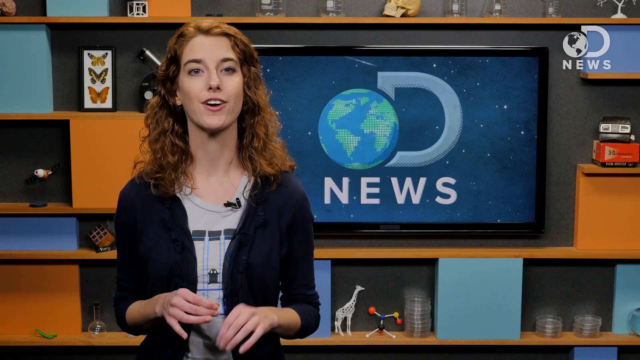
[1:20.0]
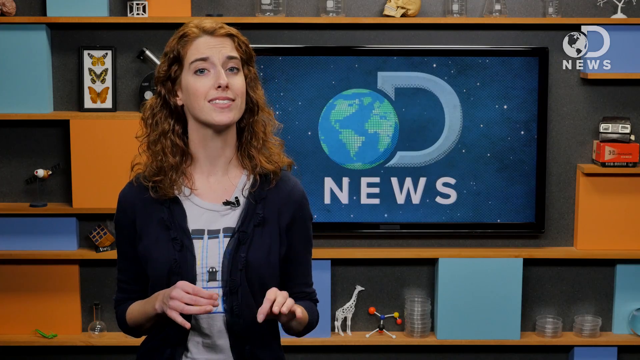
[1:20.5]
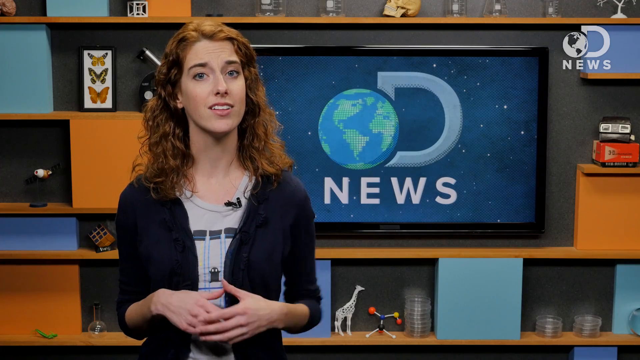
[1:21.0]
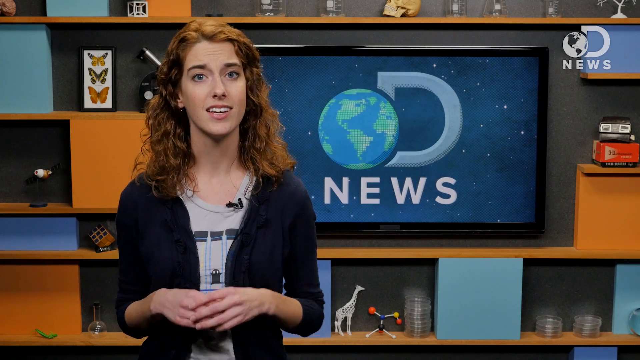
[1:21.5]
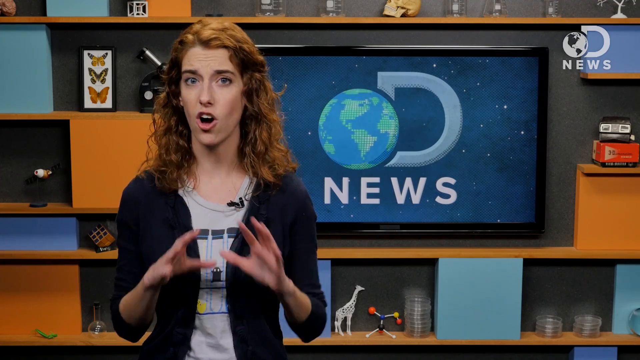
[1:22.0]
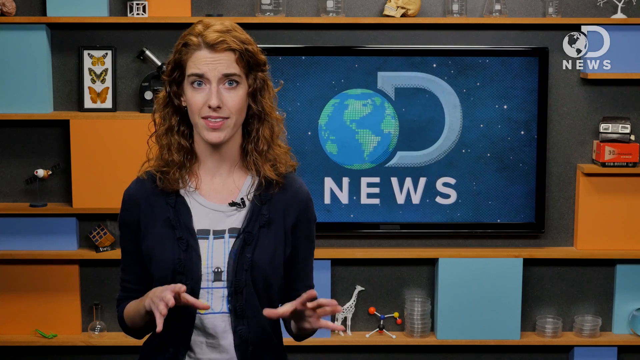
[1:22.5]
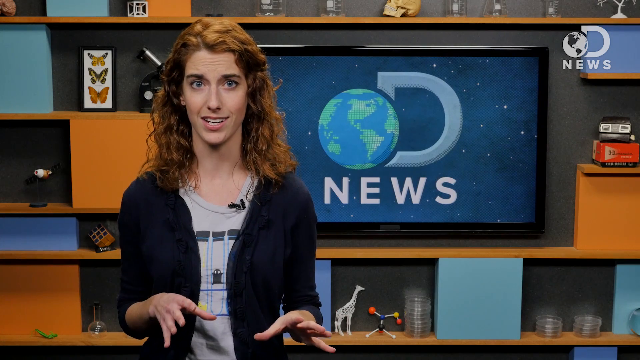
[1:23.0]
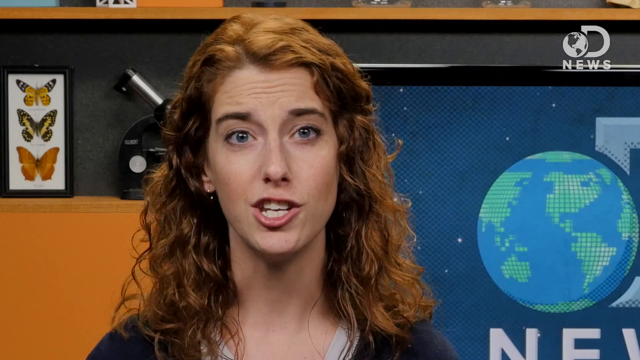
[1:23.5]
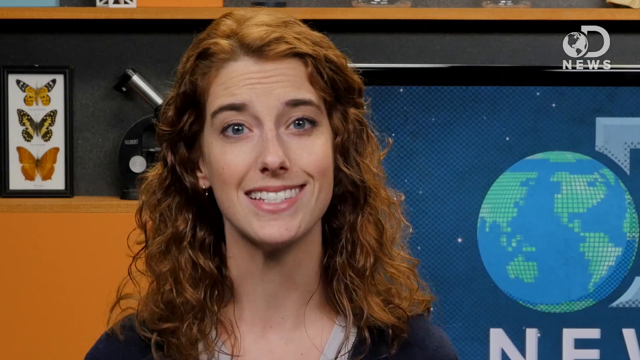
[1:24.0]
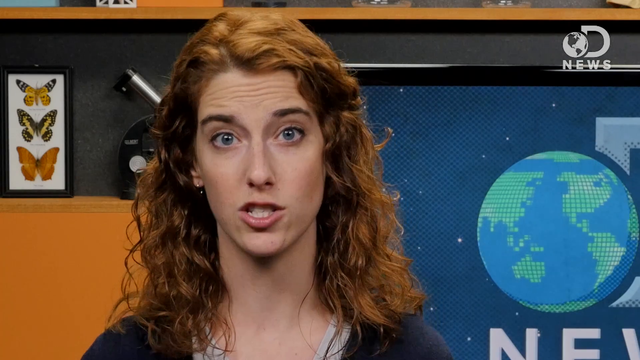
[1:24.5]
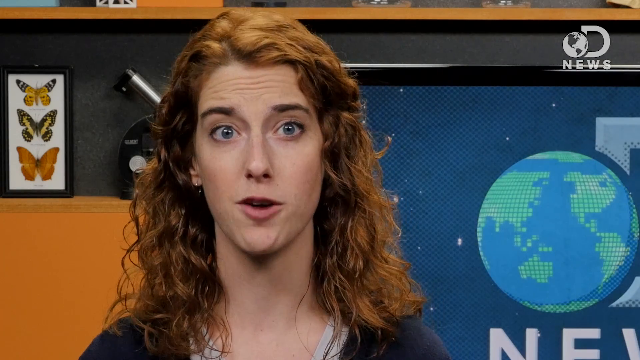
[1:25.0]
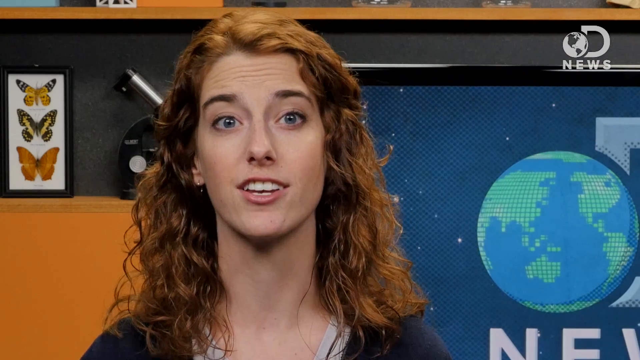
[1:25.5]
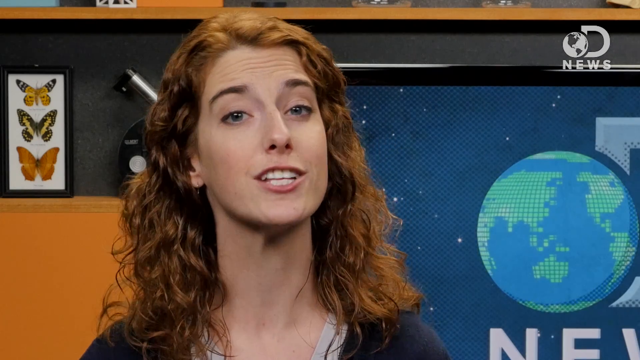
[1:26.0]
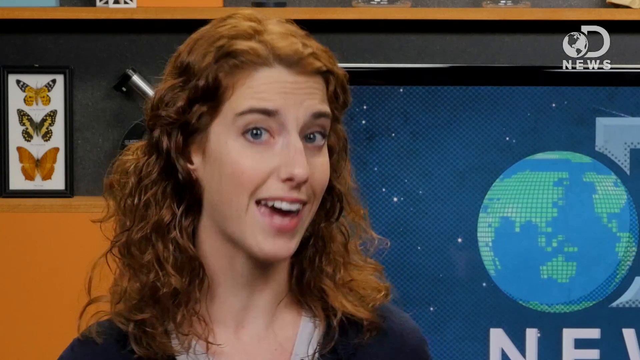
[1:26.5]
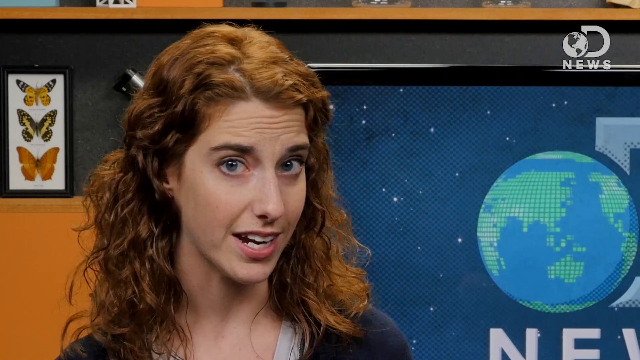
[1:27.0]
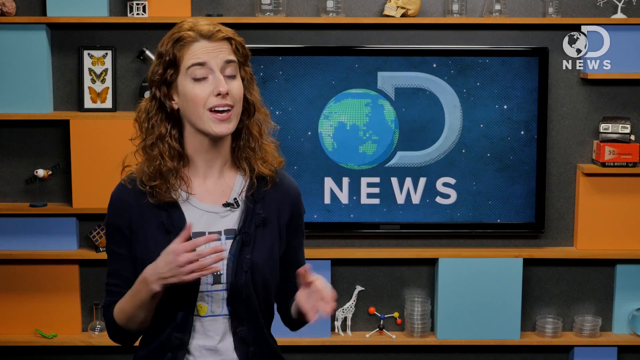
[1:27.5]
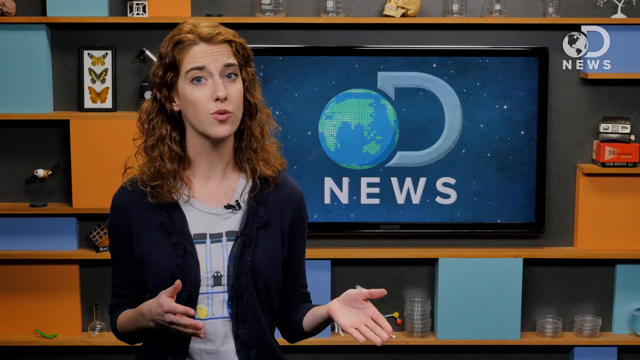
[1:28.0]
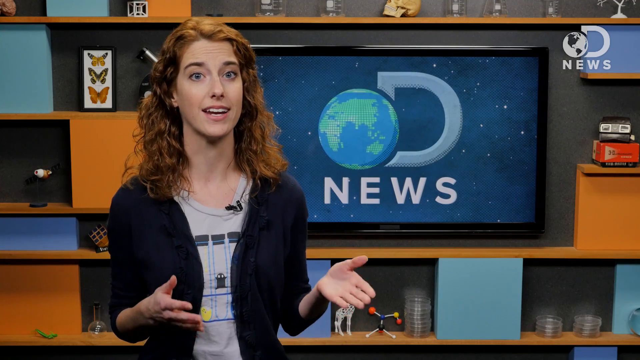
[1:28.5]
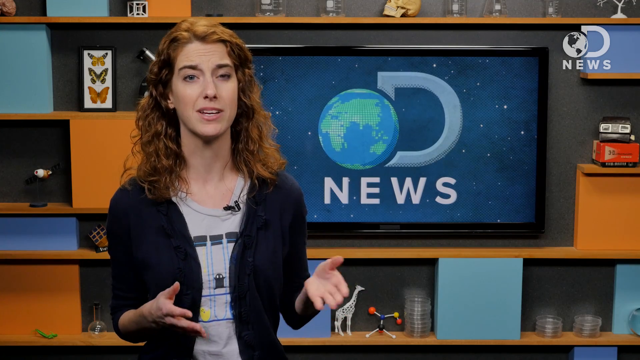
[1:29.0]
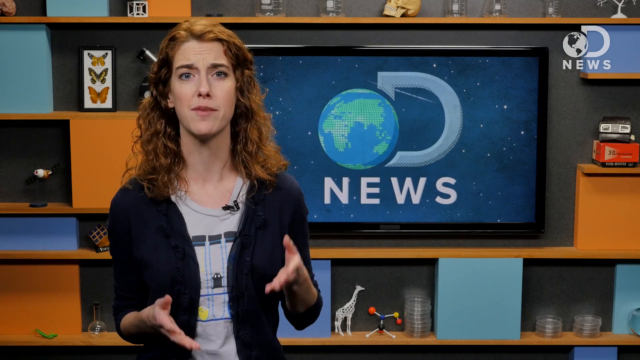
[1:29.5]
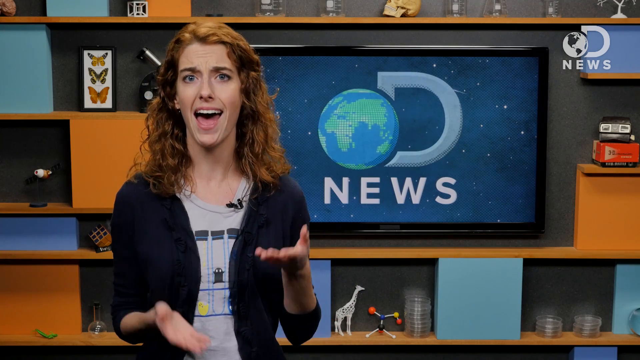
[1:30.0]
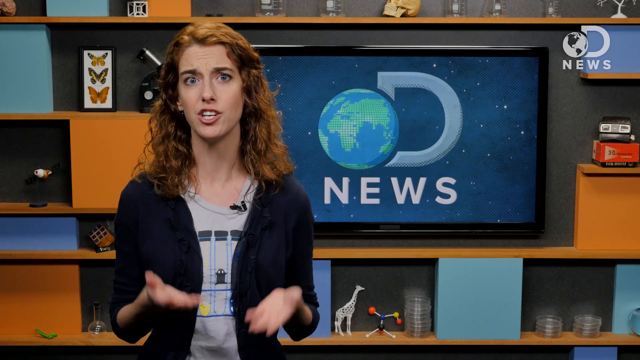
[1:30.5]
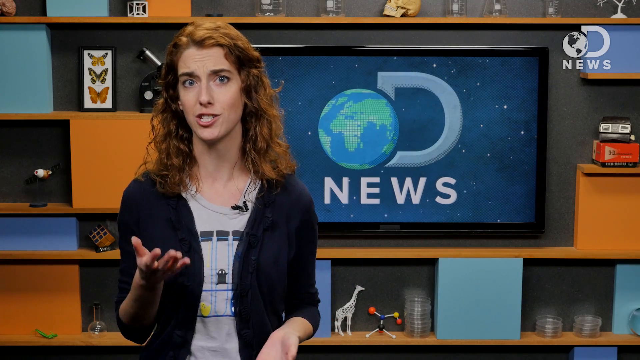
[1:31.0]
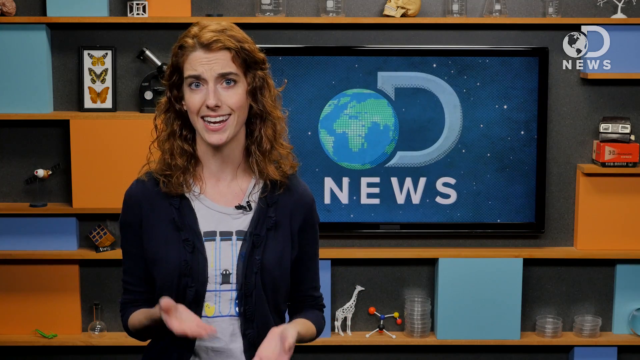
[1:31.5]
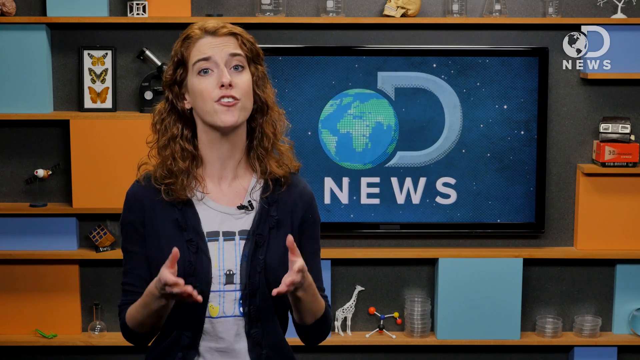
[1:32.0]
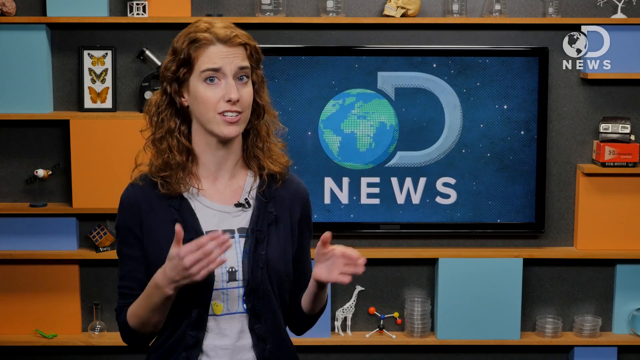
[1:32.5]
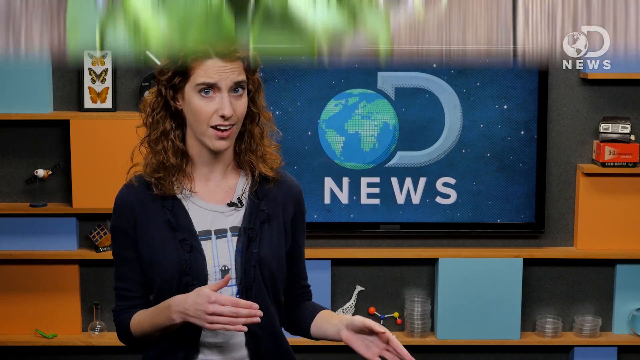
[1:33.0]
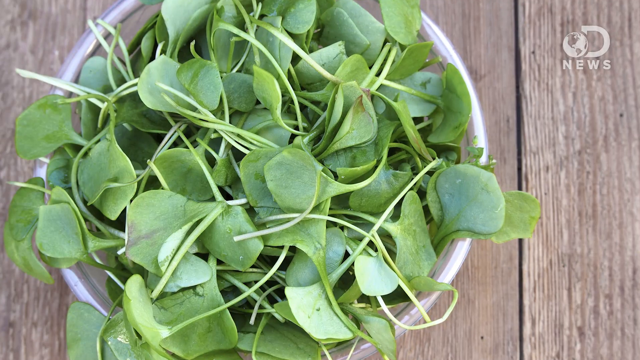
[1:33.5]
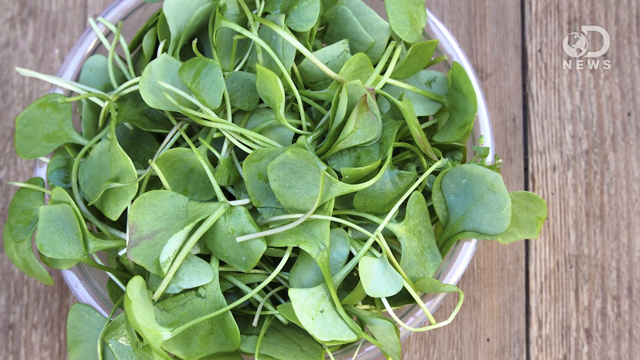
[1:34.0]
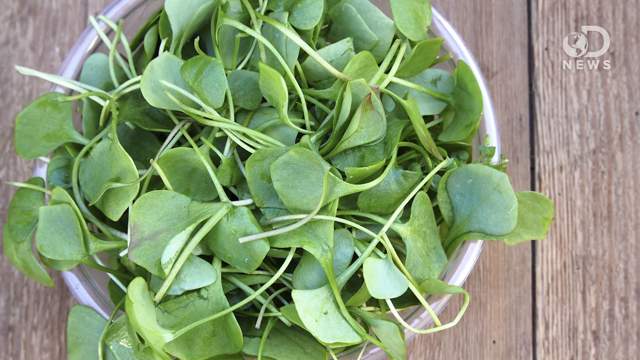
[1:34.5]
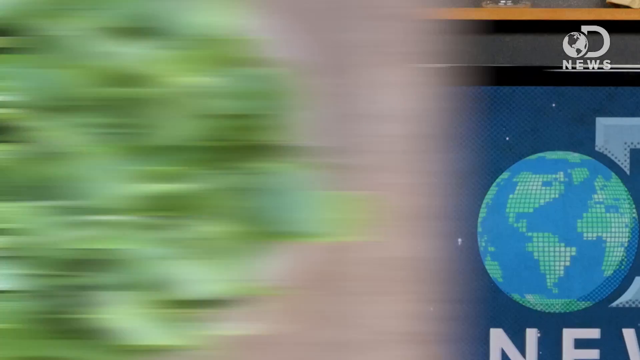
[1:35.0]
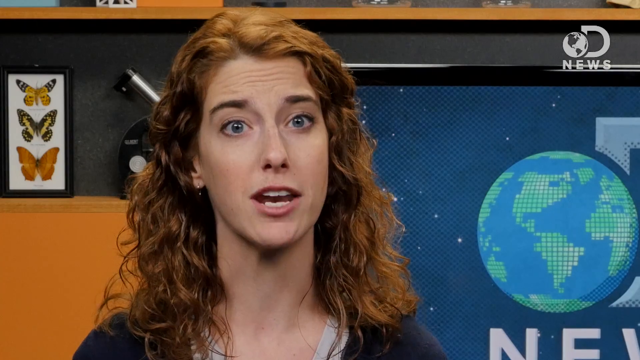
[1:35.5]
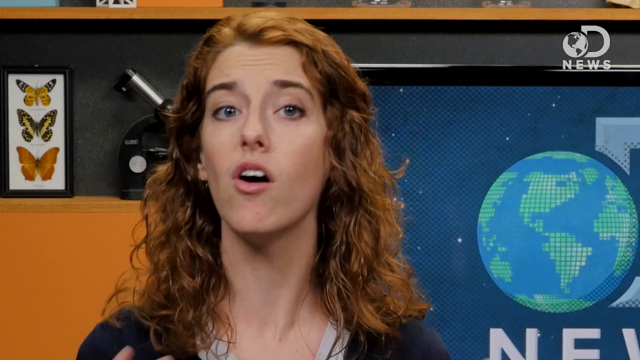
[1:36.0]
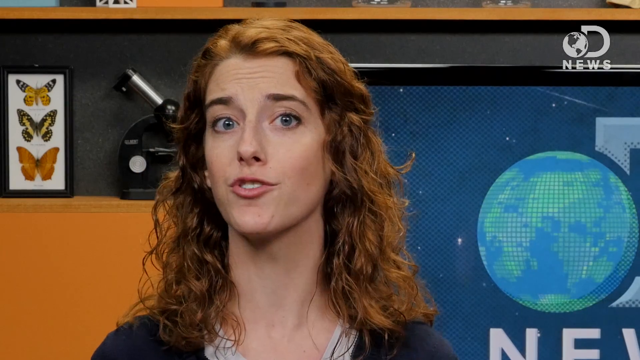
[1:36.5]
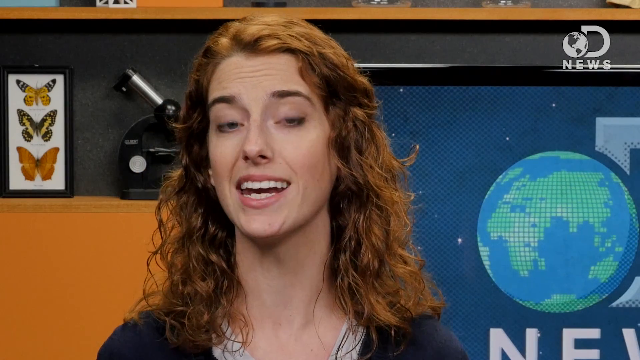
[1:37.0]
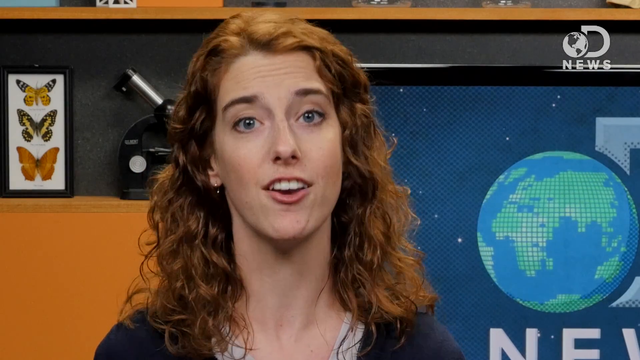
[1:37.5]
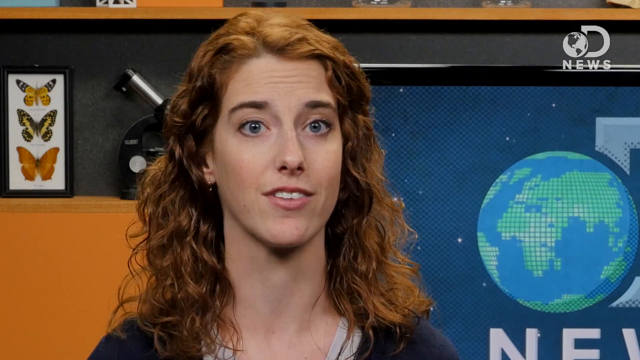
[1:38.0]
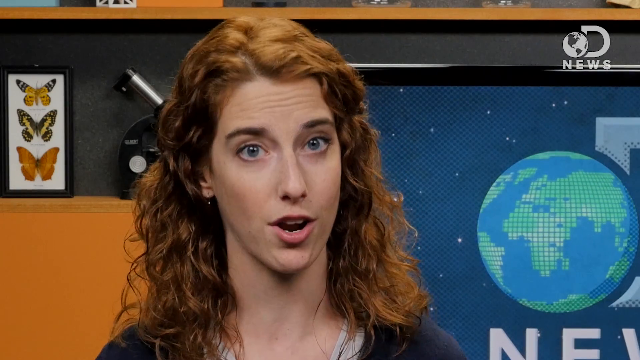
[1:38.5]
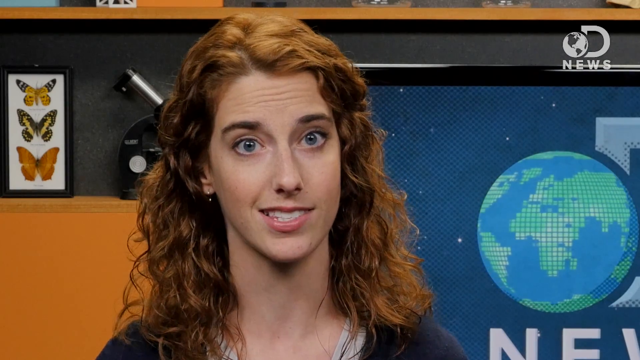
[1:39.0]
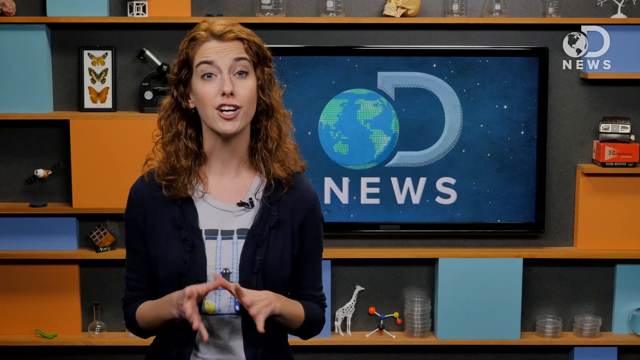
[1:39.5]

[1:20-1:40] The same white woman with red hair and blue eyes talks directly to the camera, wearing a black cardigan sweater over a gray t-shirt with a logo on it. She is apparently in a news studio with a colorful background of light blue, orange and black, and a large TV monitor over her left shoulder shows the word "news" and a spinning globe icon. She is very expressive with her face and hand gestures. The camera pans away to a short video of a bowl of some kind of leafy vegetable, hard to identify exactly, then cuts back to her face as she continues.